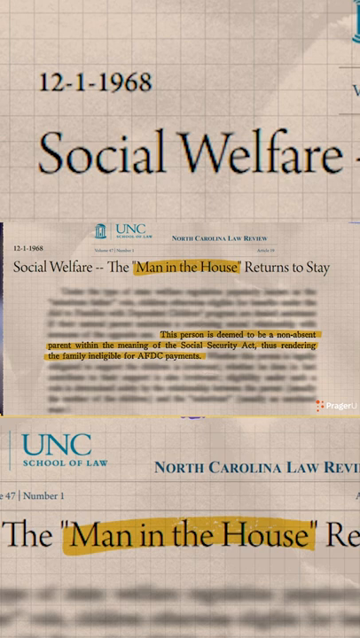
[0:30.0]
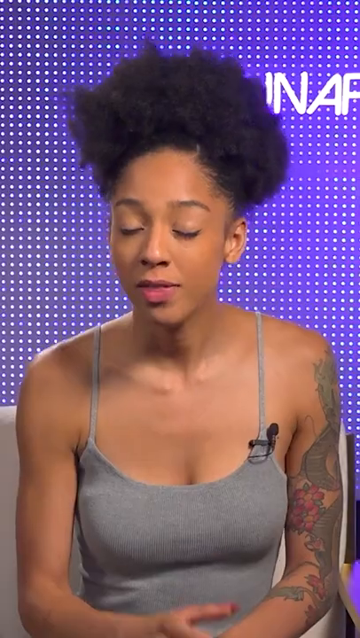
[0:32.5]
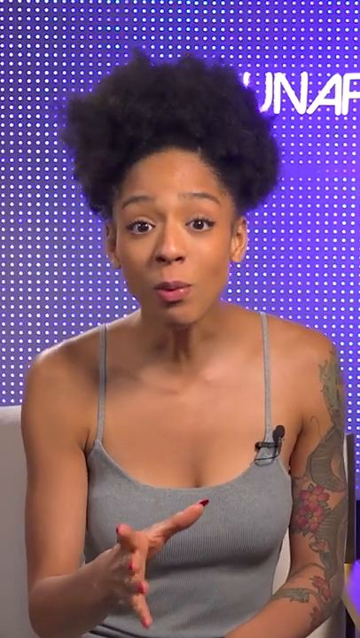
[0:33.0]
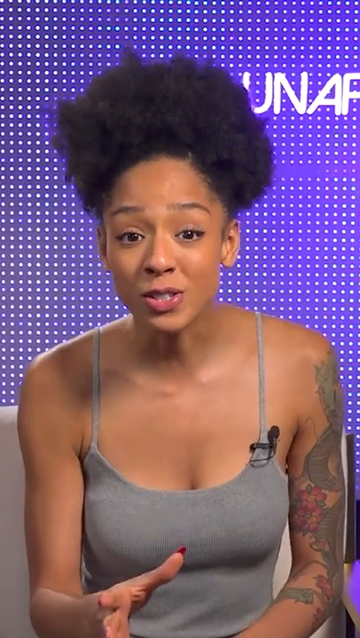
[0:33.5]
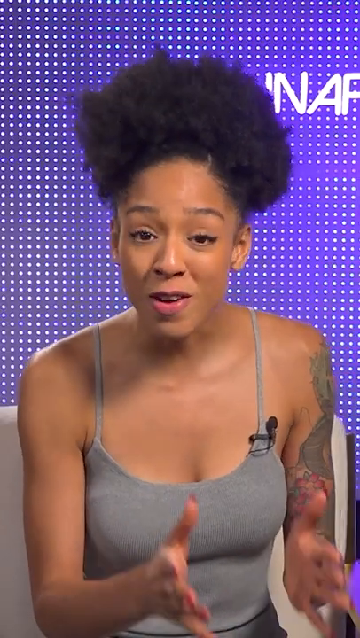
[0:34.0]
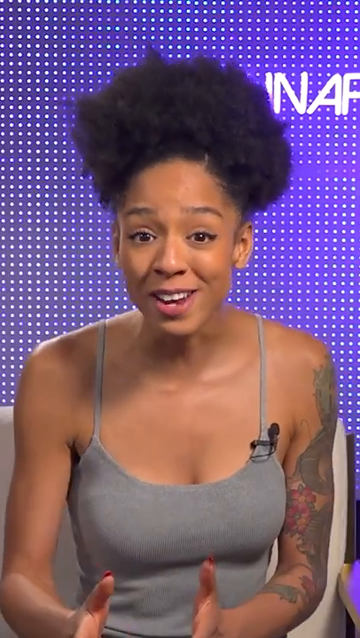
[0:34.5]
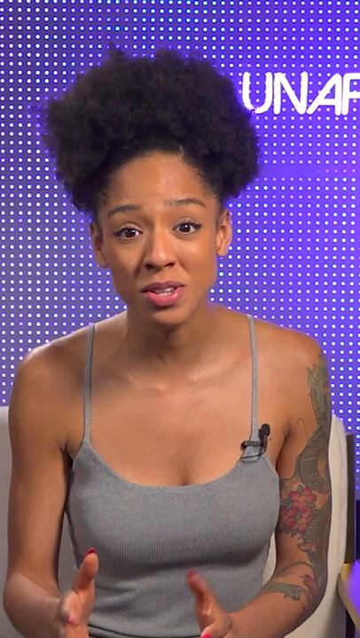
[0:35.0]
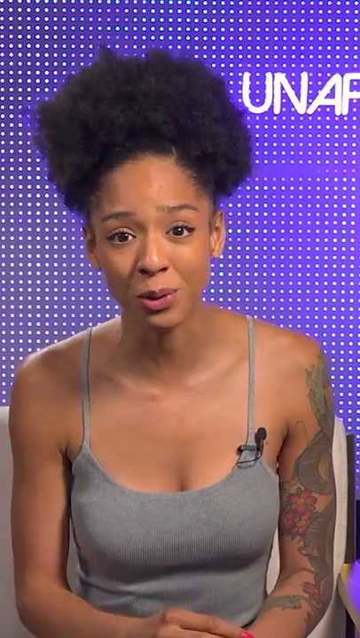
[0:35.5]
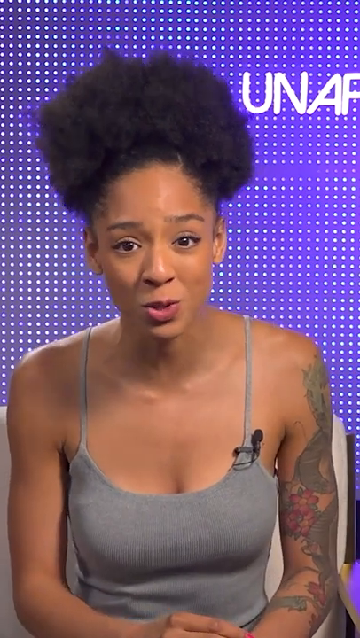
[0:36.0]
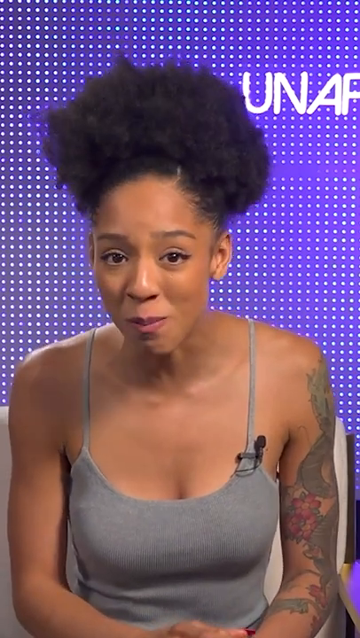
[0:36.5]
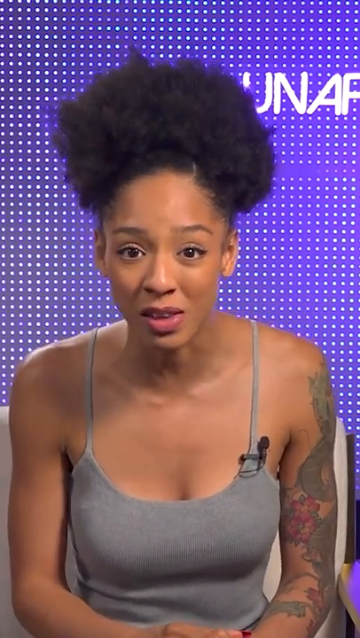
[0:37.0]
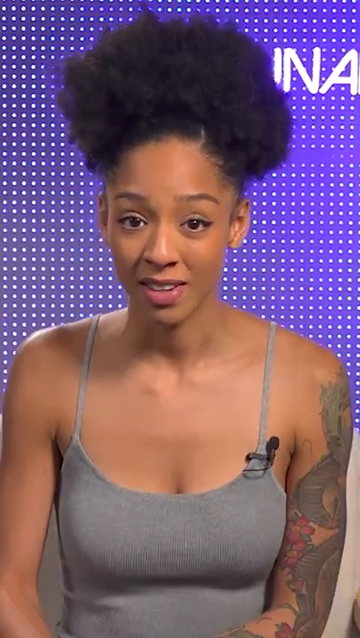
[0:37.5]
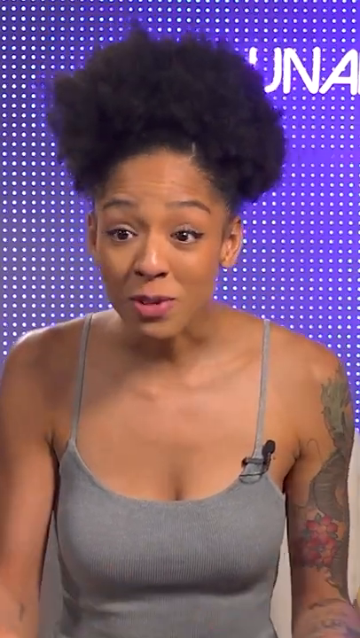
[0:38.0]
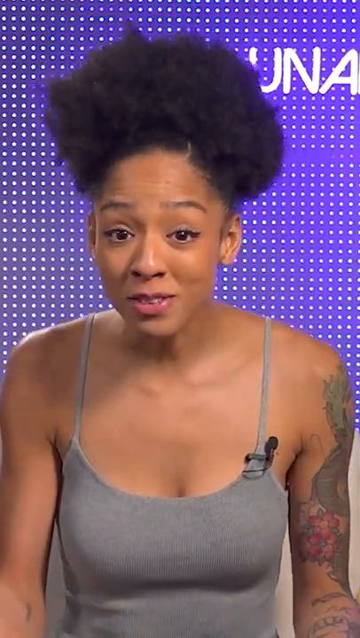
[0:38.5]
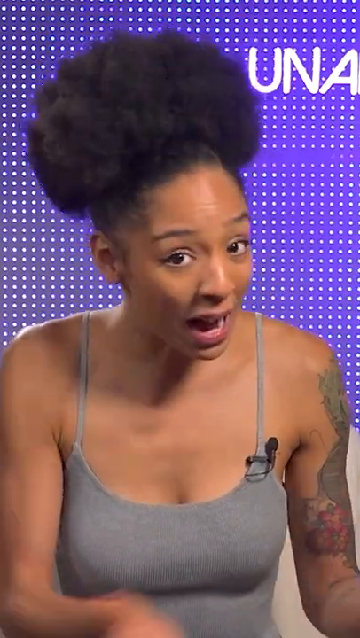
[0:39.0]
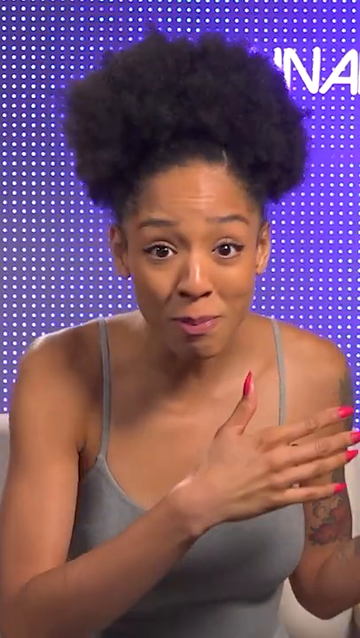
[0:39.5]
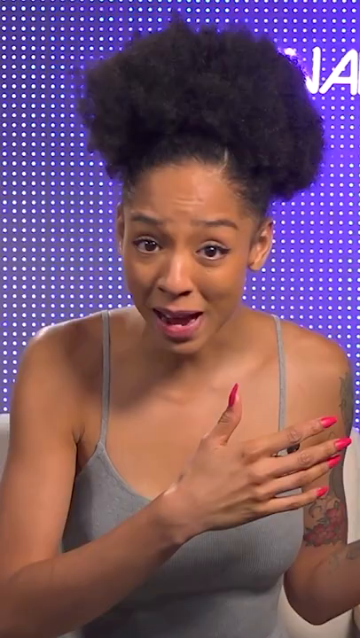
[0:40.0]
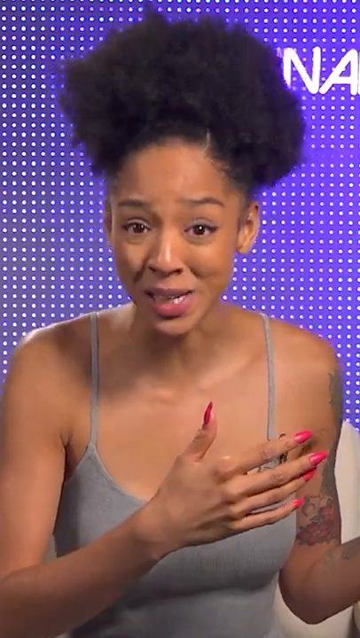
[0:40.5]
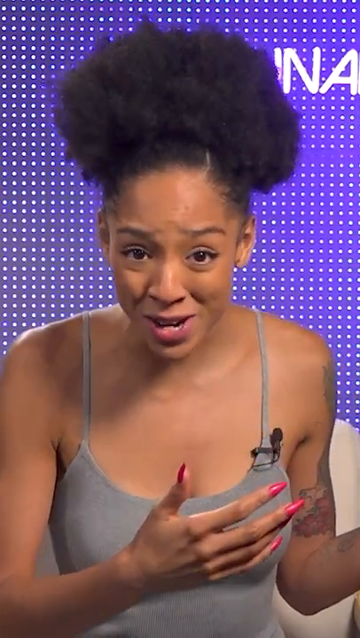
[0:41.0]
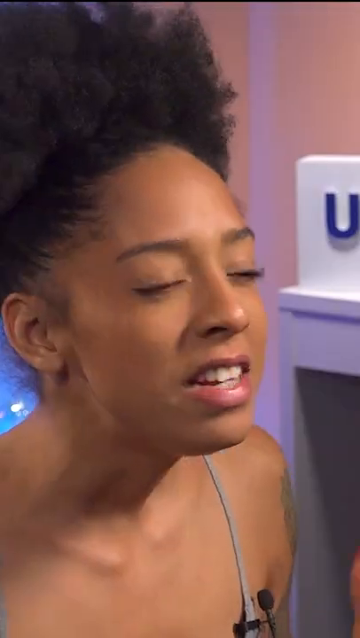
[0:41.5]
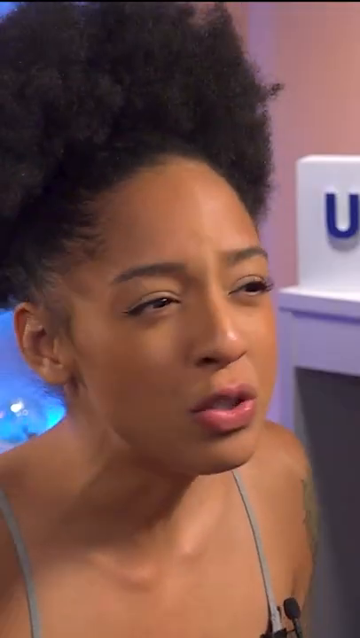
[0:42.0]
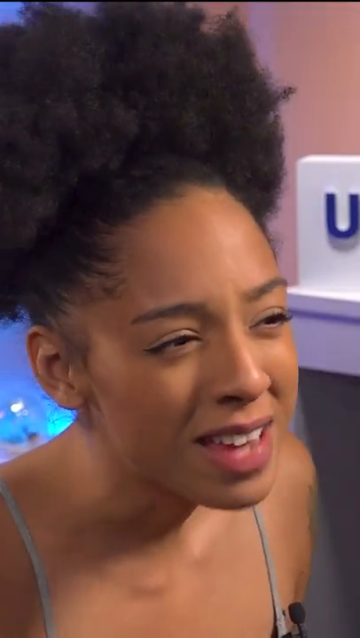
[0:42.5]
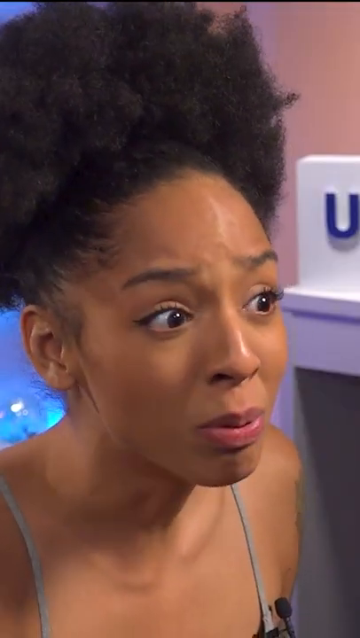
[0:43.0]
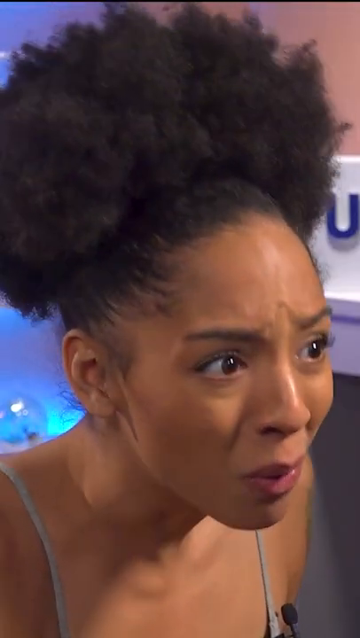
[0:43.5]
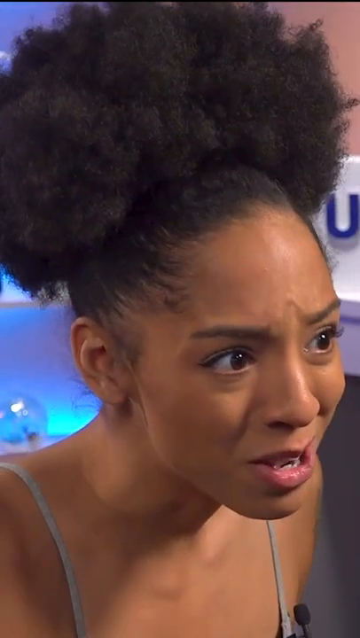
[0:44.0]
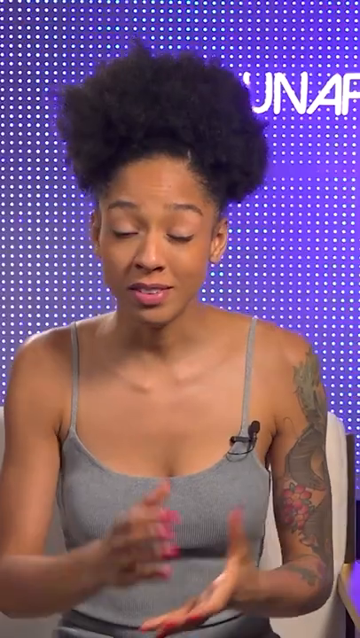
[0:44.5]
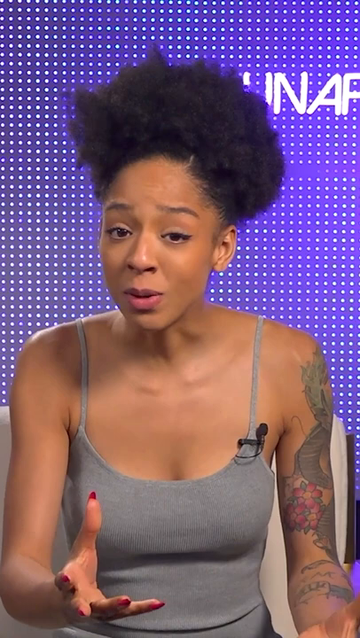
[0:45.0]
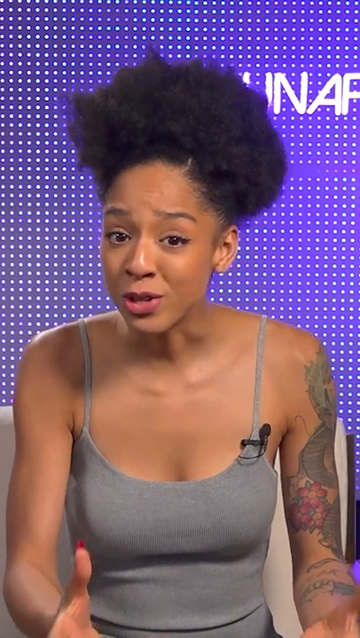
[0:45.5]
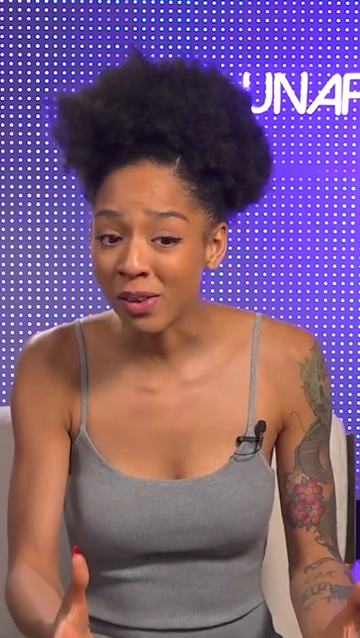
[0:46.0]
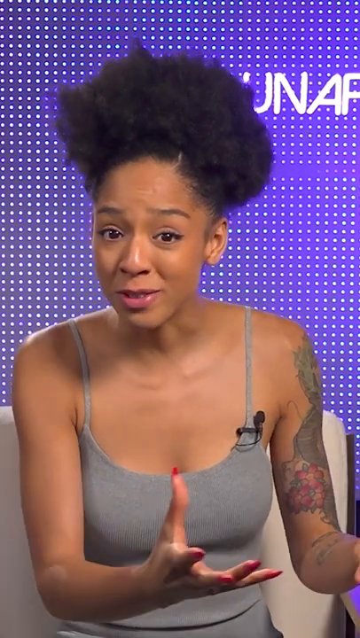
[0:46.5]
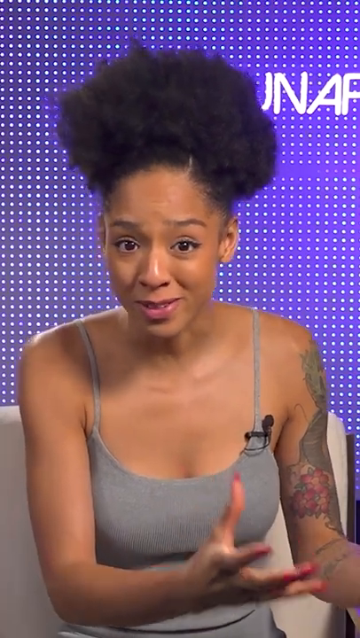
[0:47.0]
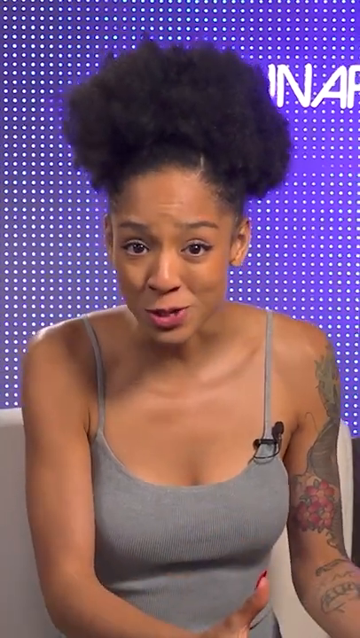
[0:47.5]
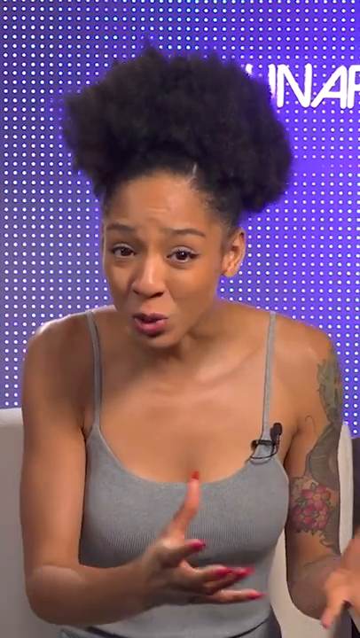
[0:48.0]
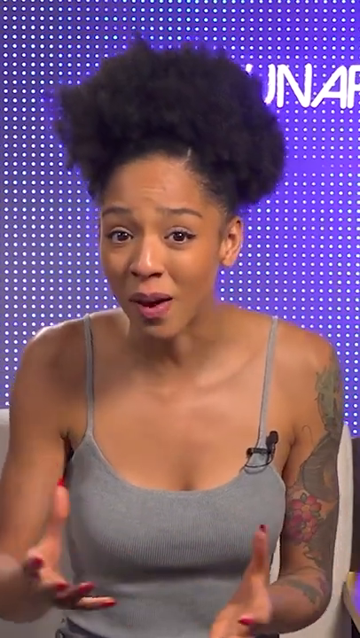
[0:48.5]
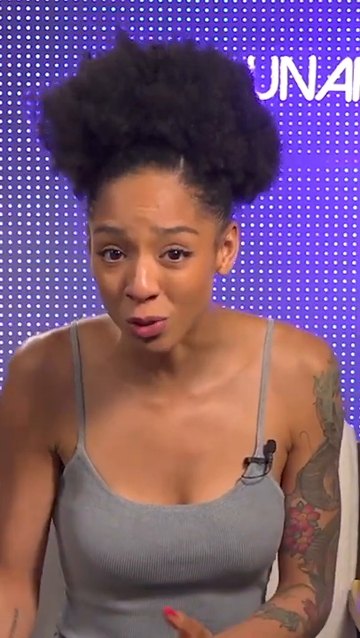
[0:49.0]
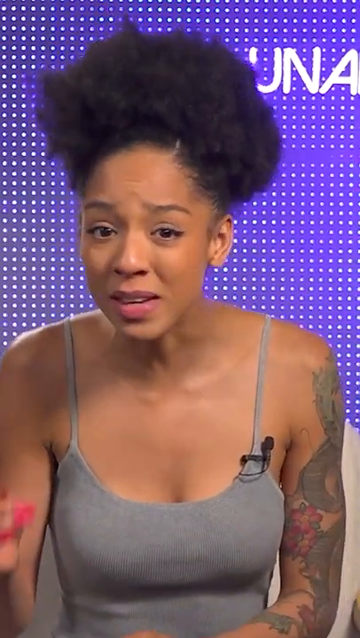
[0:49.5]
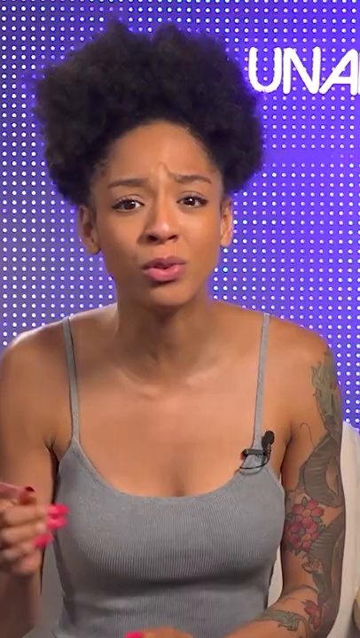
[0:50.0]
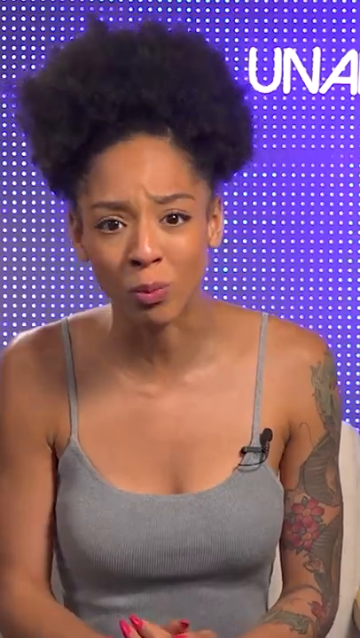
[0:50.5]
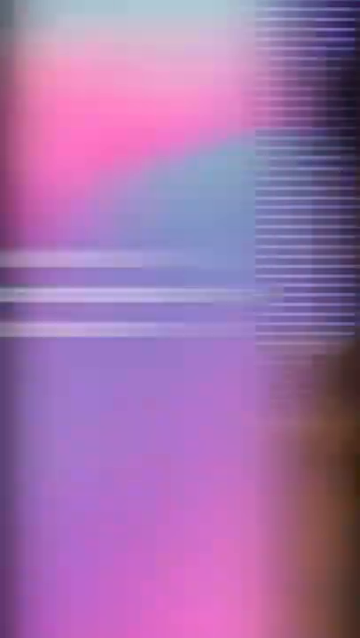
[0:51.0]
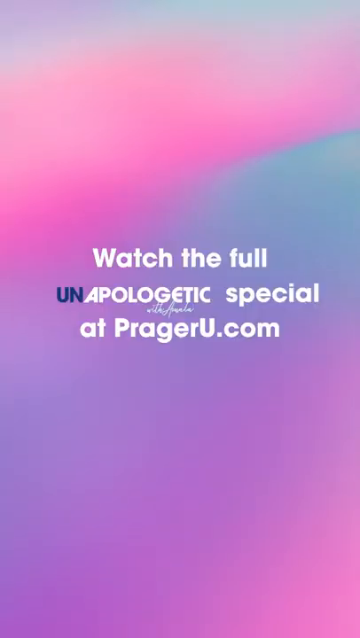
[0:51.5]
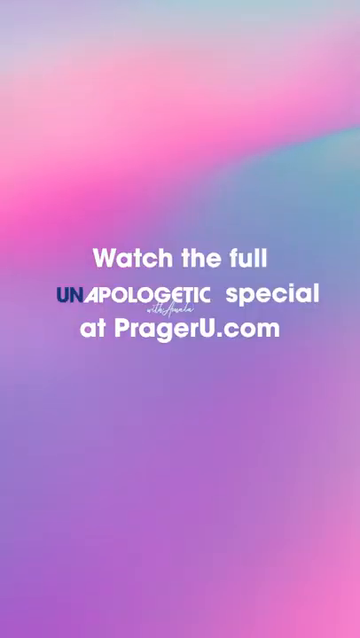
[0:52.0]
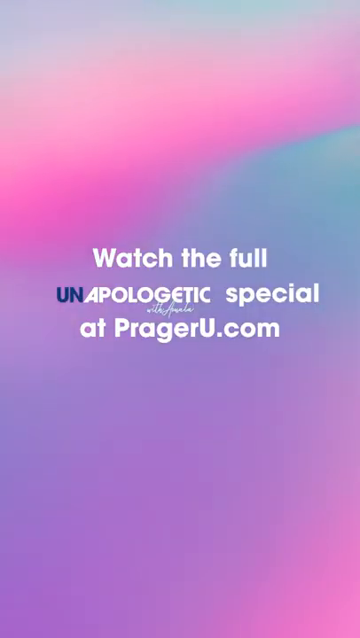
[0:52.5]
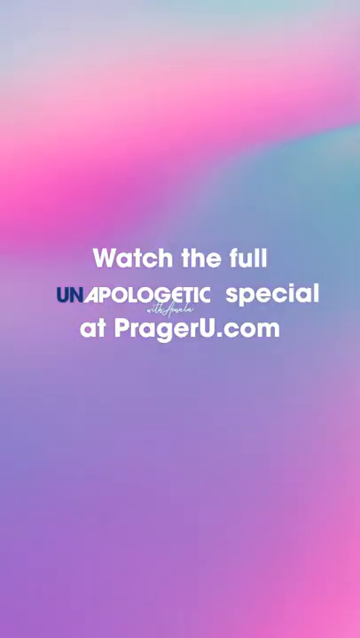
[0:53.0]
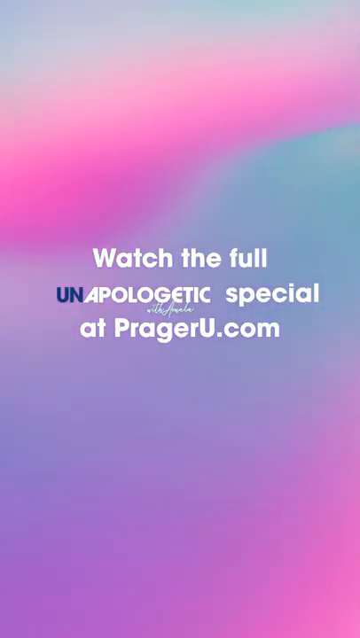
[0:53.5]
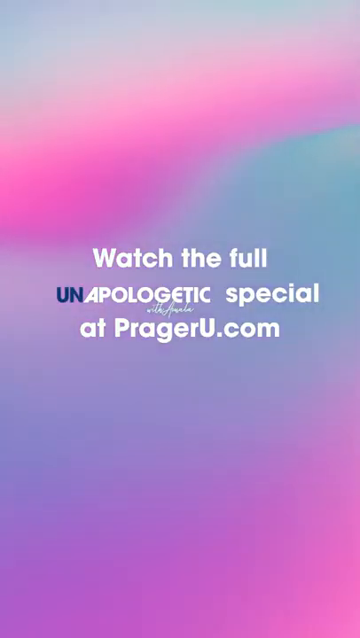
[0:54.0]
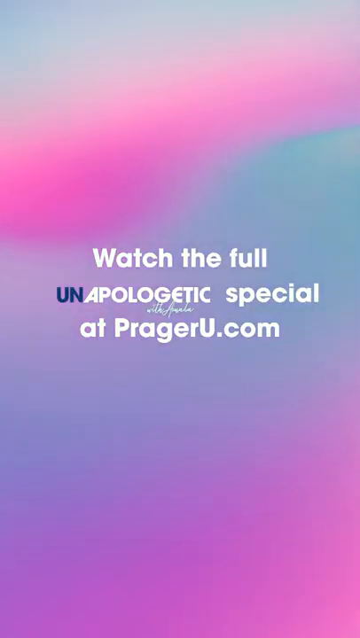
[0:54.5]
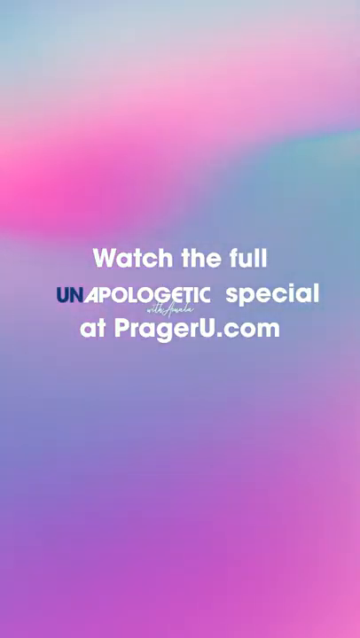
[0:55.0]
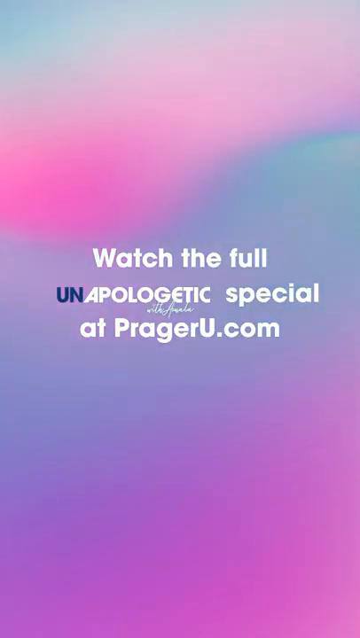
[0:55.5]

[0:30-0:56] The young Black woman, in a video apparently about fatherlessness, addresses a headline in a newspaper. There are words on the background behind her that are hard to make out. On-screen text reads "watch the full apologetic special." A headline reads "the man in the house returns to stay."